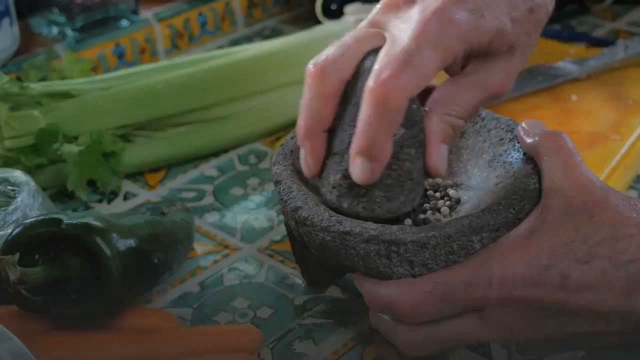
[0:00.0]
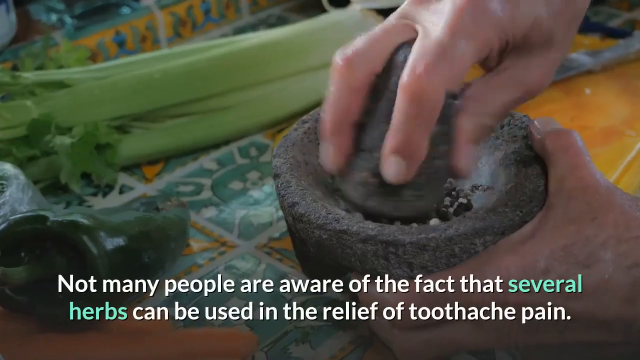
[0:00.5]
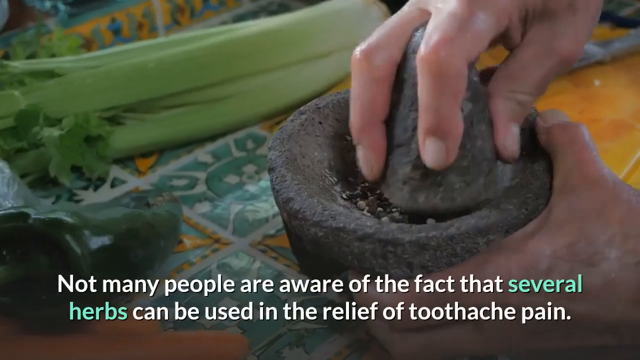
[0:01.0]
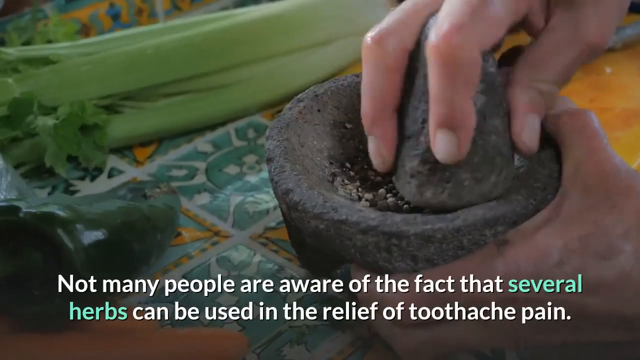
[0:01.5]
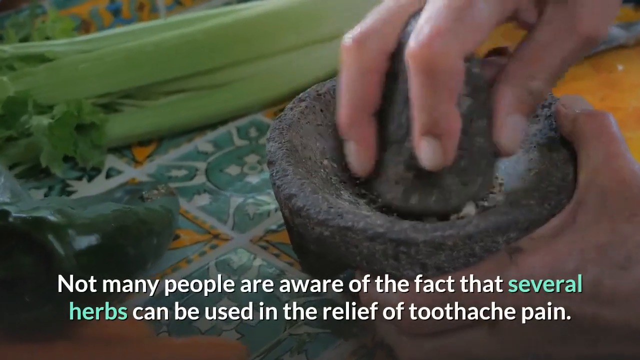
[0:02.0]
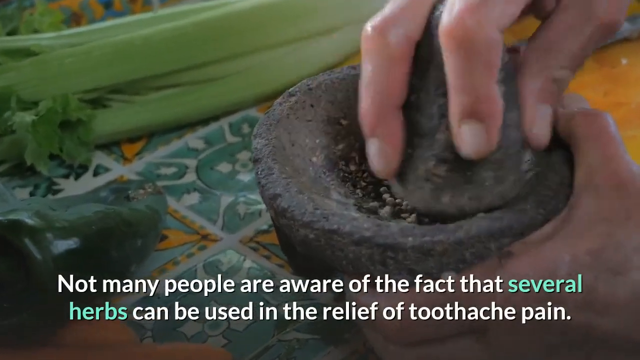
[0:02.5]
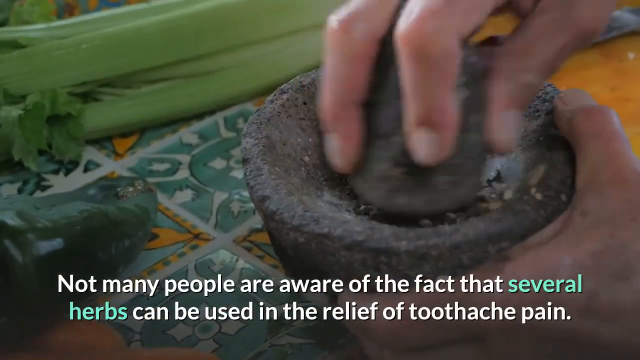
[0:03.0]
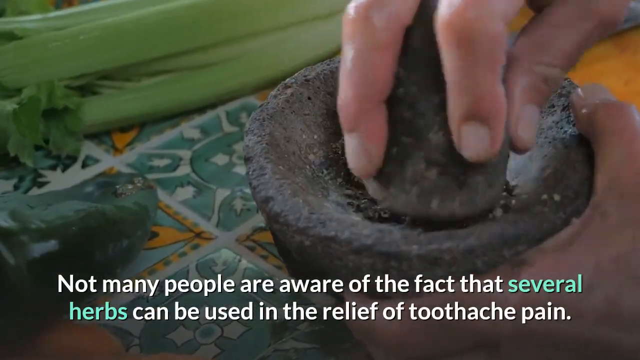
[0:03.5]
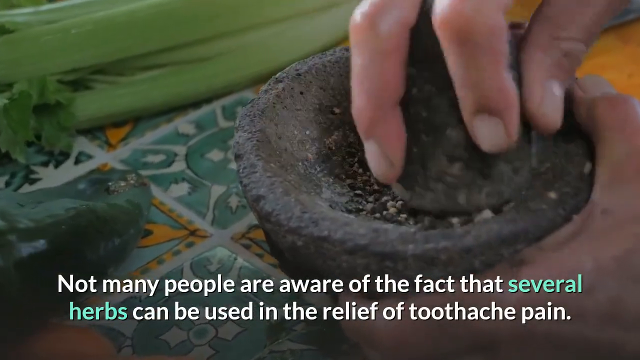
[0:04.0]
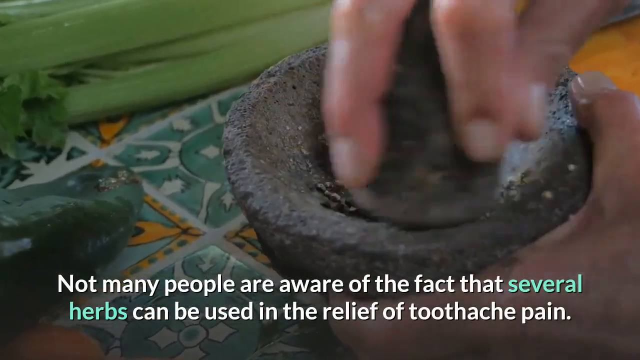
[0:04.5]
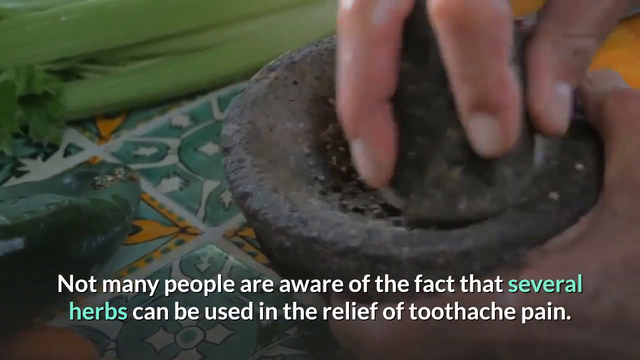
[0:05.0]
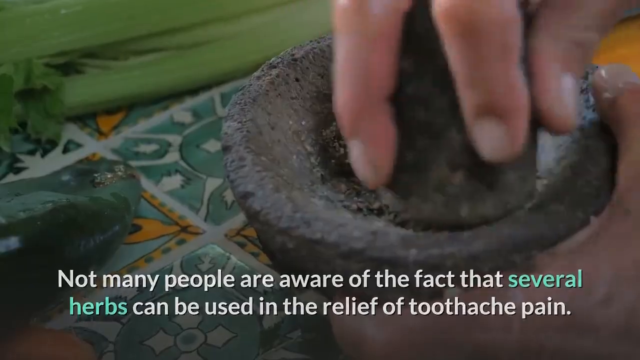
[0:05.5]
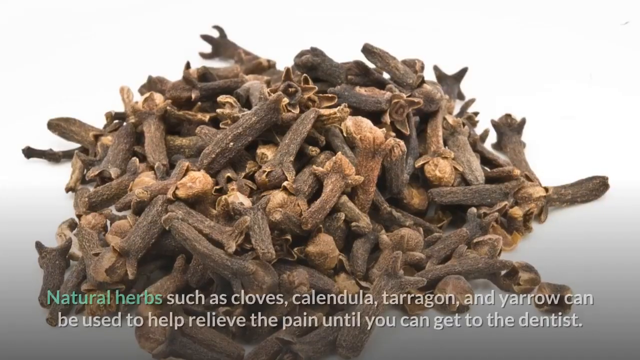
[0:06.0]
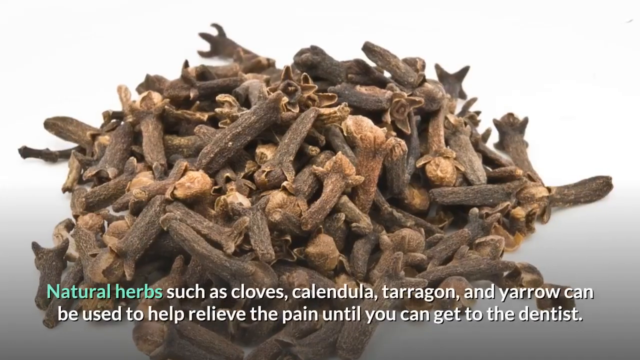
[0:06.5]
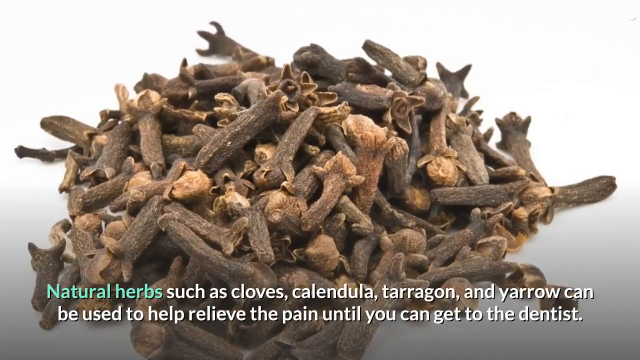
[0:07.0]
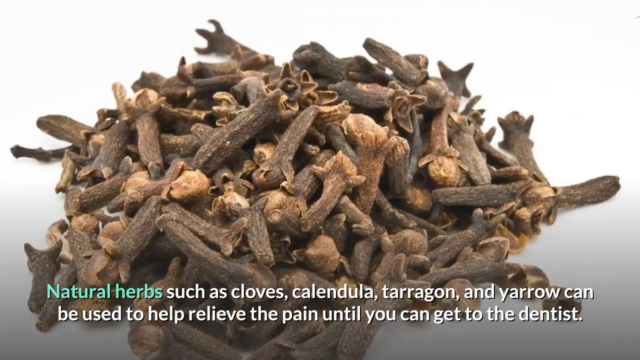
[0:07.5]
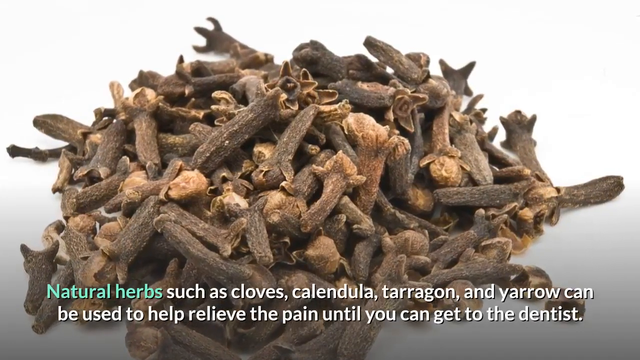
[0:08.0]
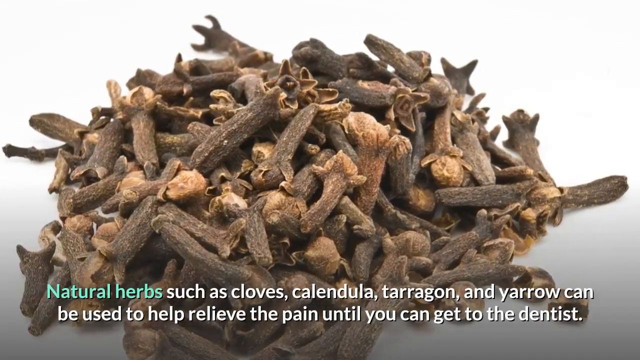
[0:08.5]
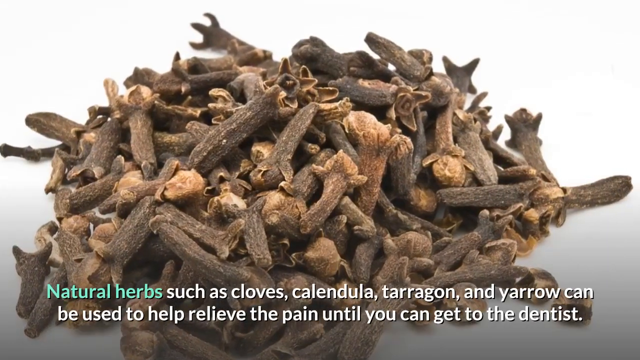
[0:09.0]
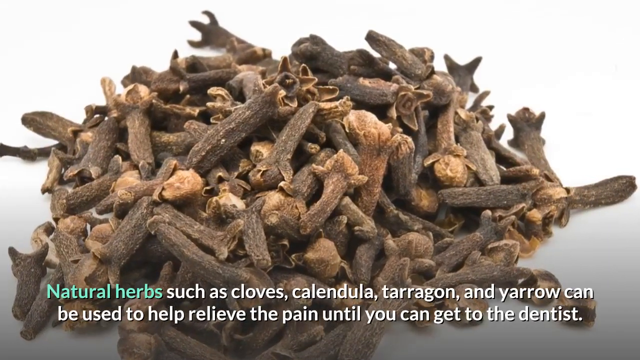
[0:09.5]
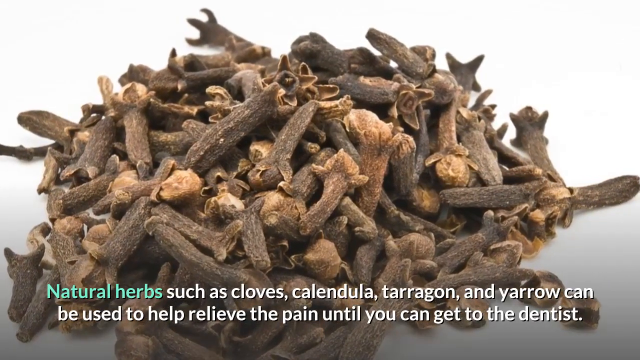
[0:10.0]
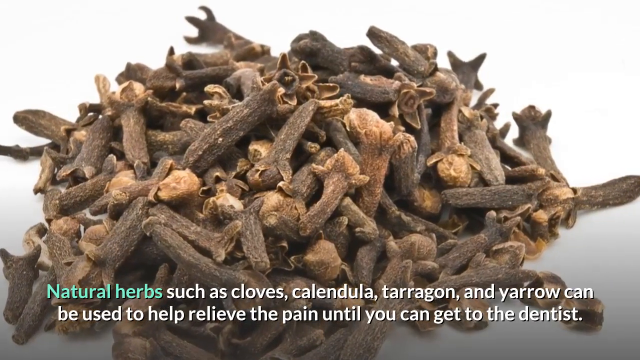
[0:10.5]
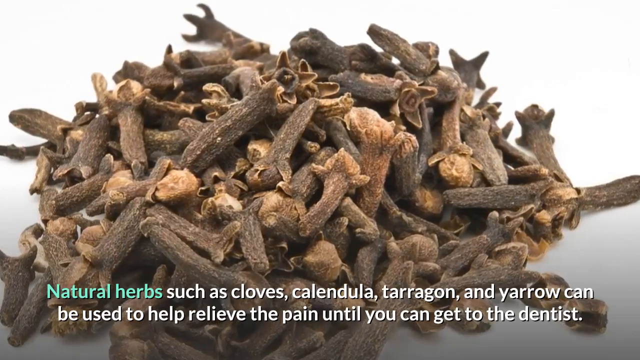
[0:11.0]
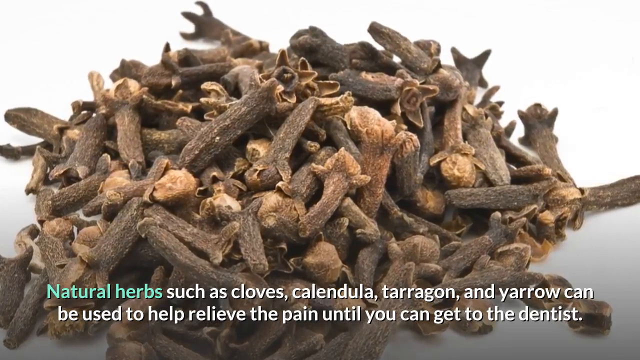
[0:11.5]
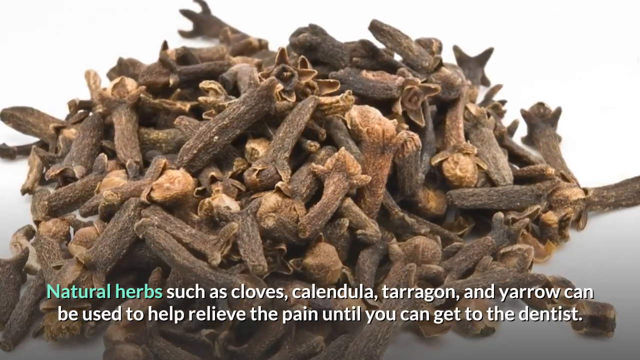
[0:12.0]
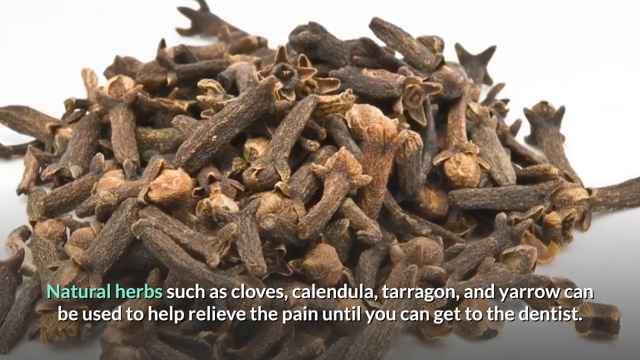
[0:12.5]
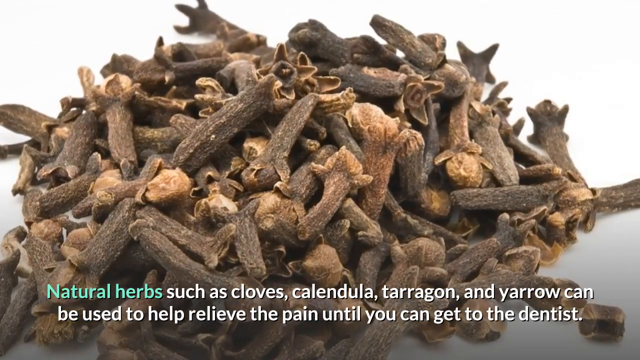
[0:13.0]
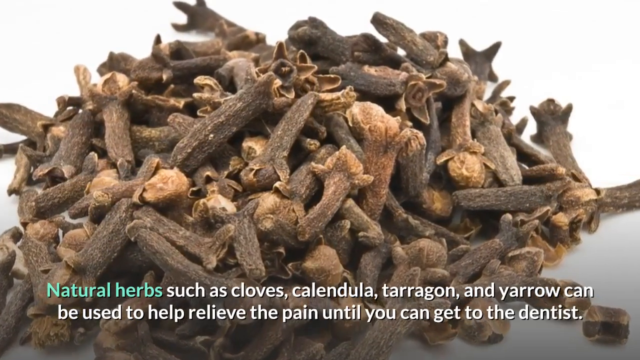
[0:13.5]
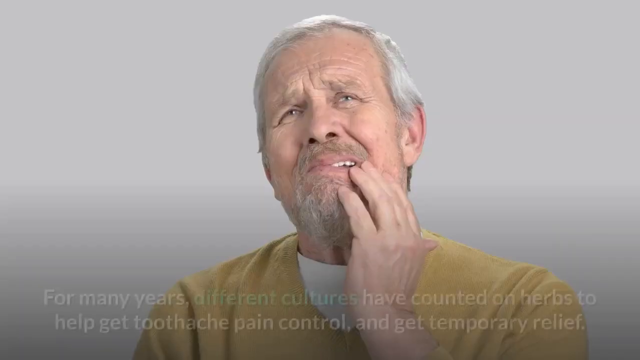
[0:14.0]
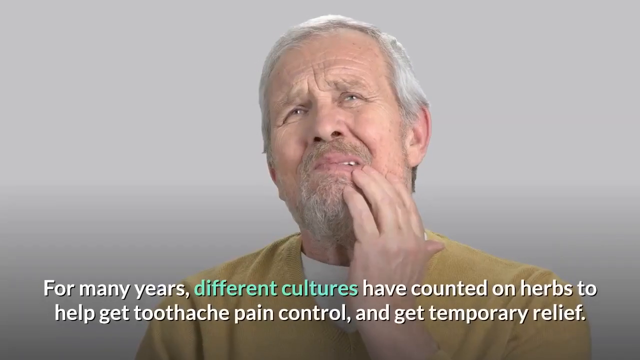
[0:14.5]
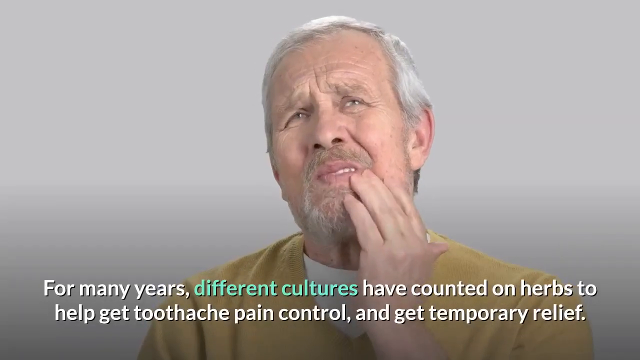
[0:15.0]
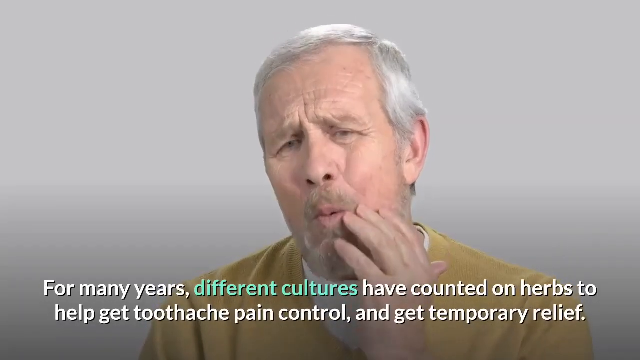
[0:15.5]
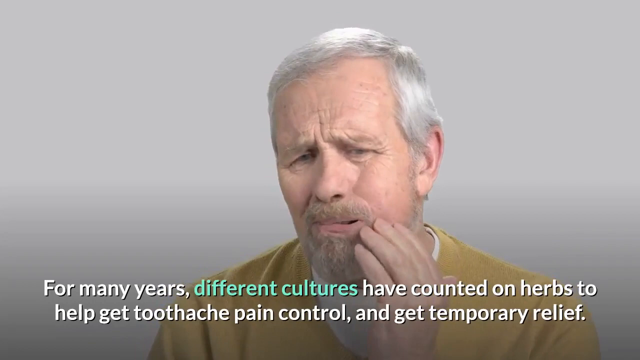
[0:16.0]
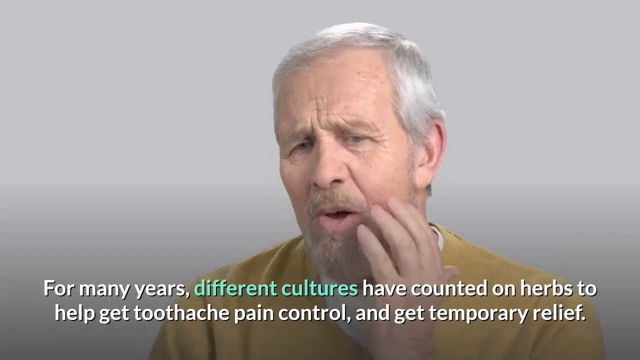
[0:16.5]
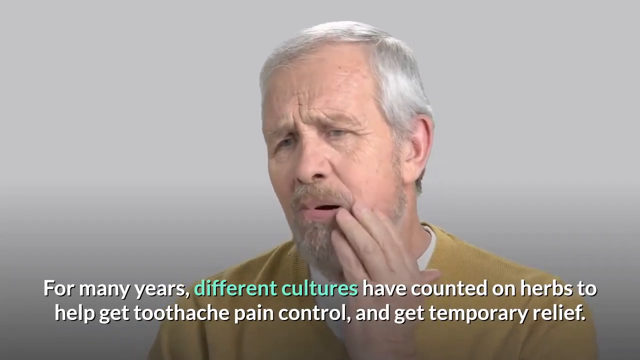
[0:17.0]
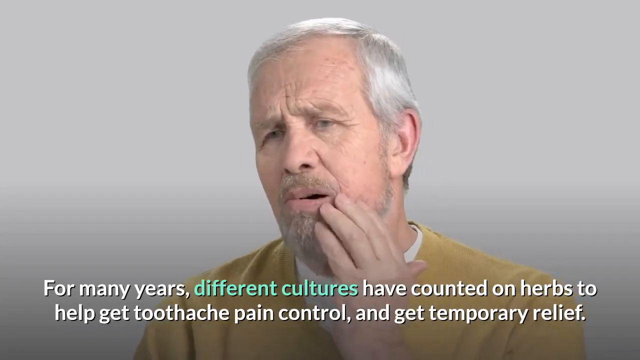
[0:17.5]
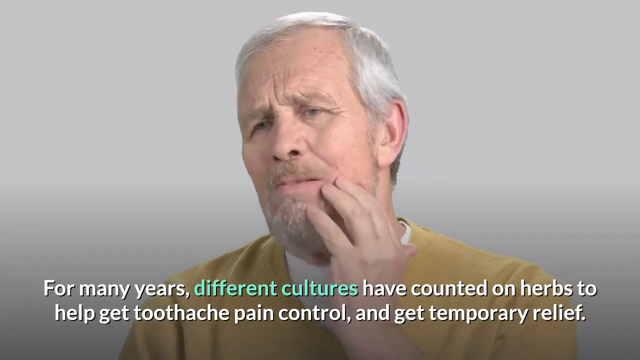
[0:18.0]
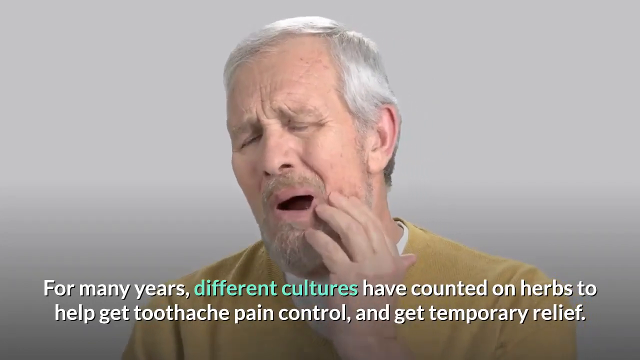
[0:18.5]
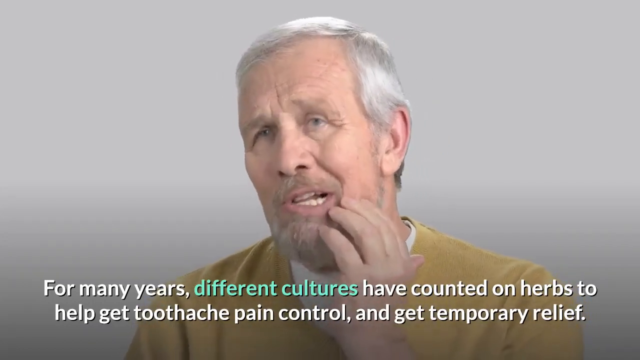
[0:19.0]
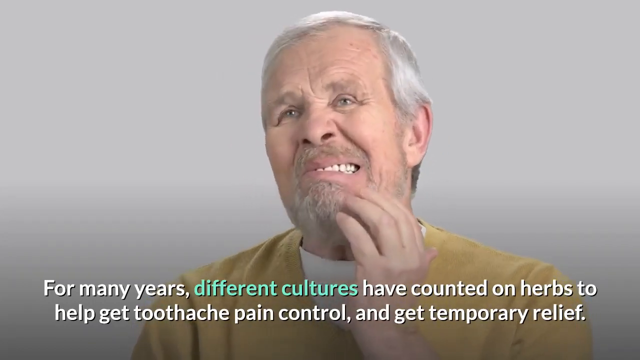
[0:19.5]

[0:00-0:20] A left hand holds a bowl and a right hand holds a pestle; inside the bowl, little round white things and little brown-black things are being ground with the pestle. Under the bowl is a tiled countertop with intricate designs in yellow, teal and a little red. Celery and a green pepper are also on the countertop, and a knife is visible in the background between the hands. White text appears at the bottom of the screen: "not many people are aware of the fact that several herbs can be used in the relief of toothache pain." The person keeps milling the herbs in the bowl in a circular motion as the camera zooms in on the activity. The next screen shows a pile of dried cloves on a white background and surface, with text underneath beginning "natural herbs such as cloves, calendula, tarragon" and ending "can be used to help relieve the pain until you can get to the dentist." Next, a man with white hair and a goatee holds his left hand up by the left side of his mouth; his eyes are squinted as if in pain and his forehead is wrinkled. The background is white, and the text at the bottom reads "for many years different cultures have counted on herbs to help get toothache pain control and get temporary relief." He moves his mouth all around as if in agonizing pain.